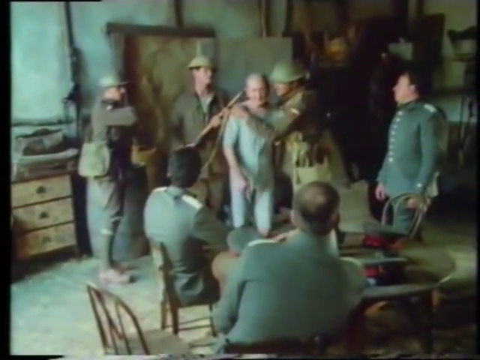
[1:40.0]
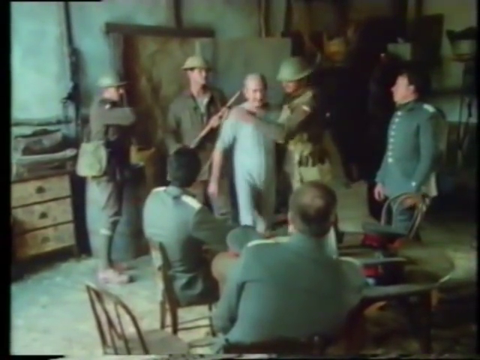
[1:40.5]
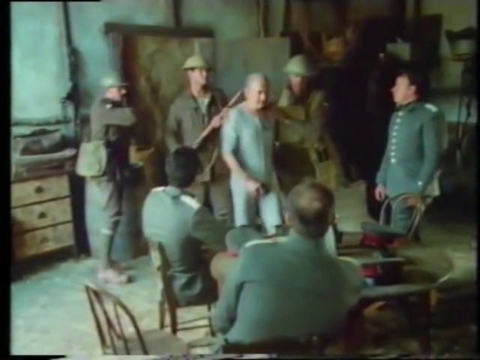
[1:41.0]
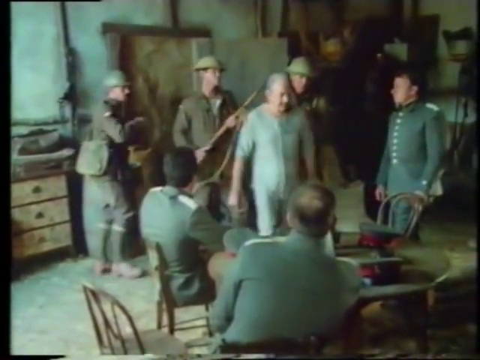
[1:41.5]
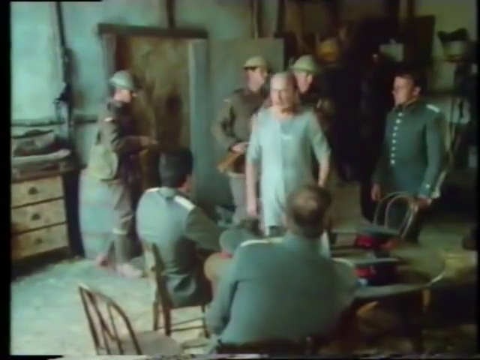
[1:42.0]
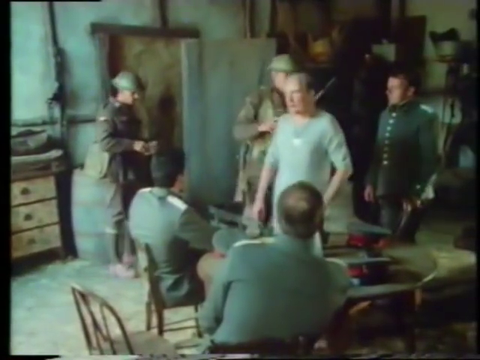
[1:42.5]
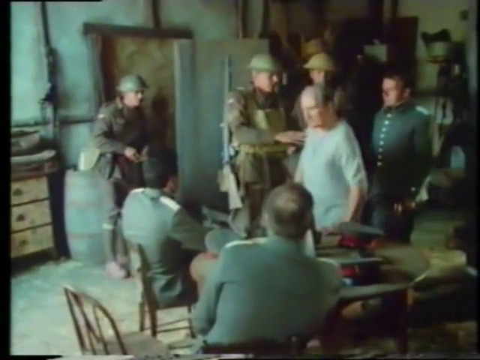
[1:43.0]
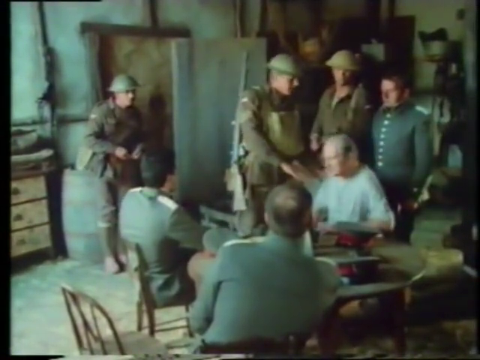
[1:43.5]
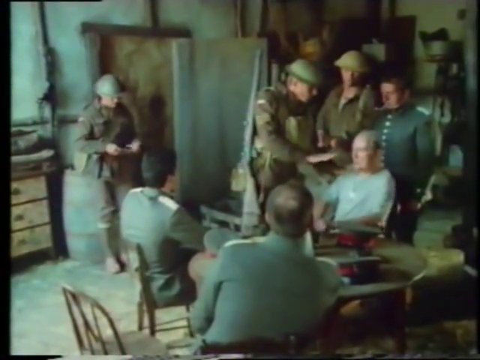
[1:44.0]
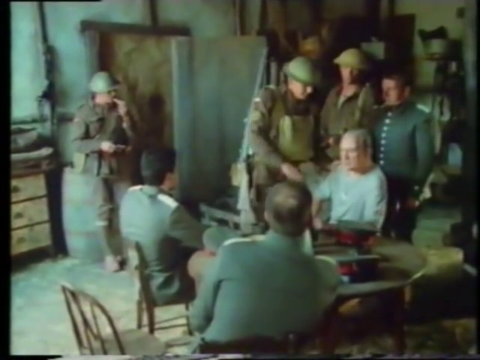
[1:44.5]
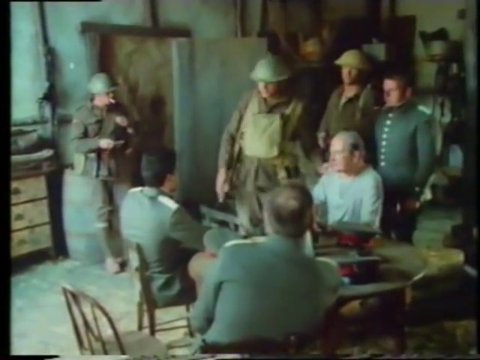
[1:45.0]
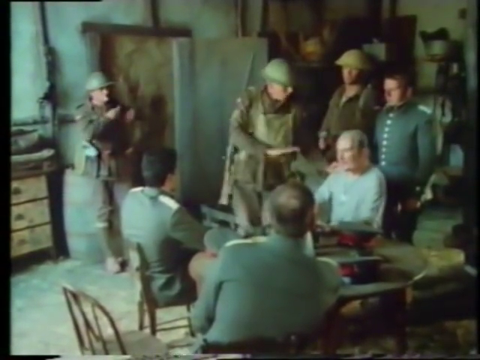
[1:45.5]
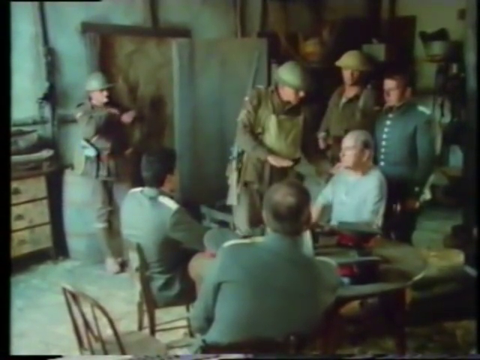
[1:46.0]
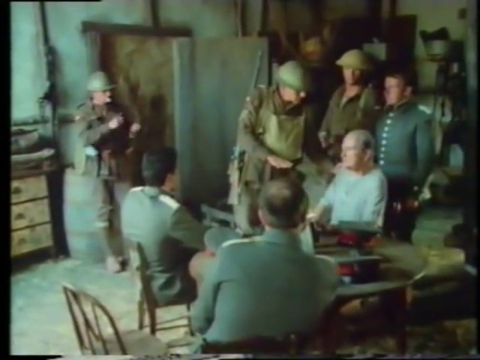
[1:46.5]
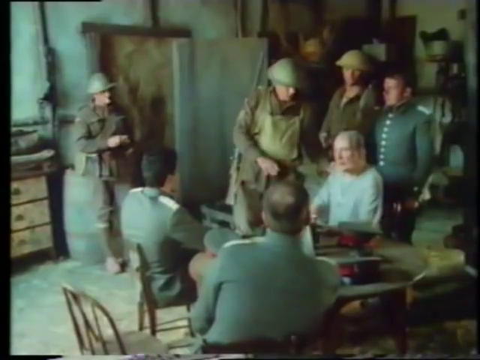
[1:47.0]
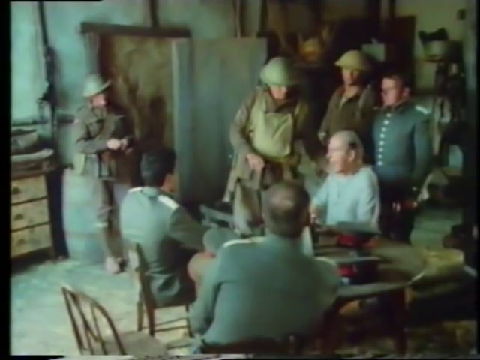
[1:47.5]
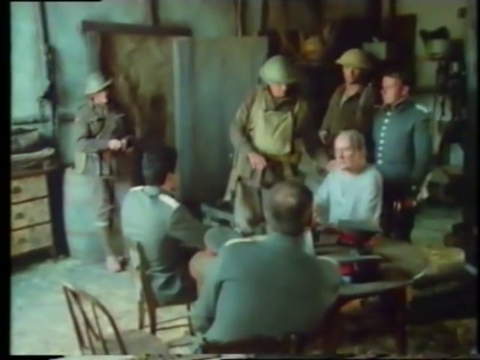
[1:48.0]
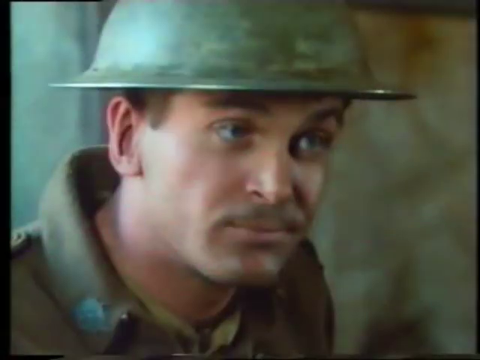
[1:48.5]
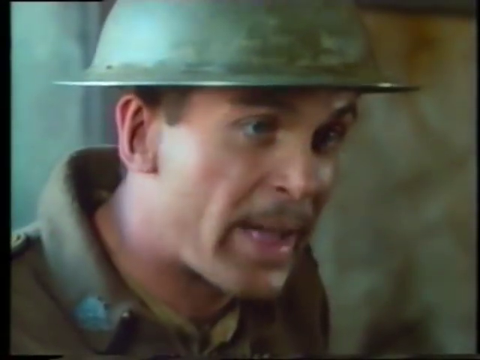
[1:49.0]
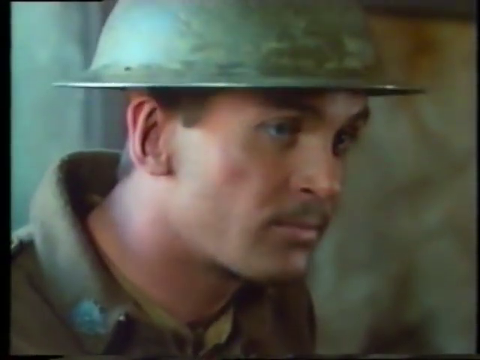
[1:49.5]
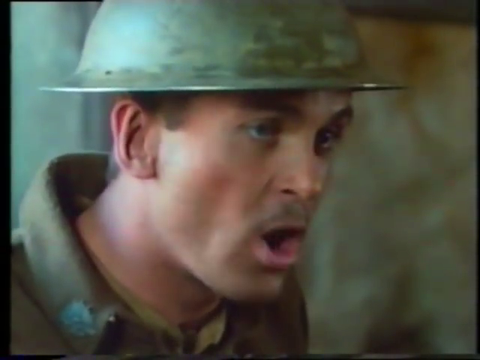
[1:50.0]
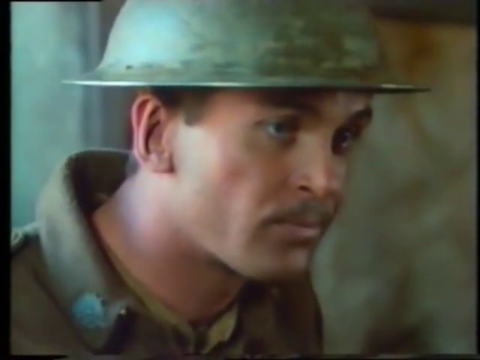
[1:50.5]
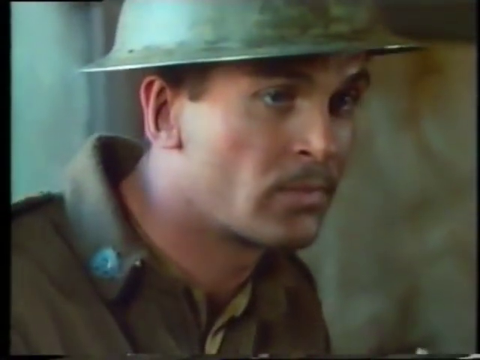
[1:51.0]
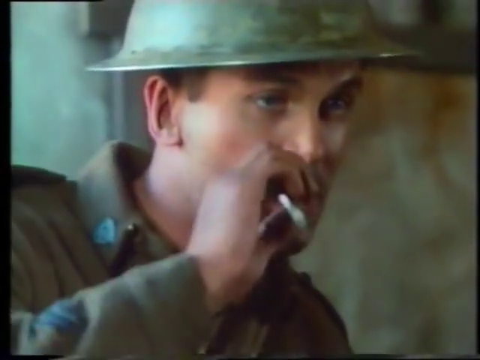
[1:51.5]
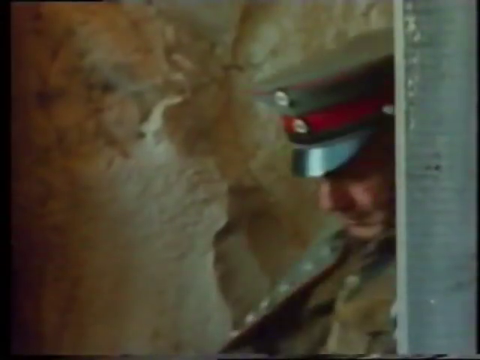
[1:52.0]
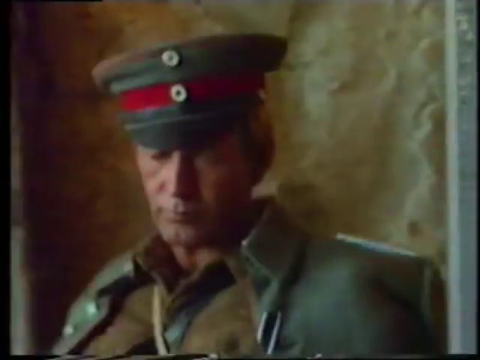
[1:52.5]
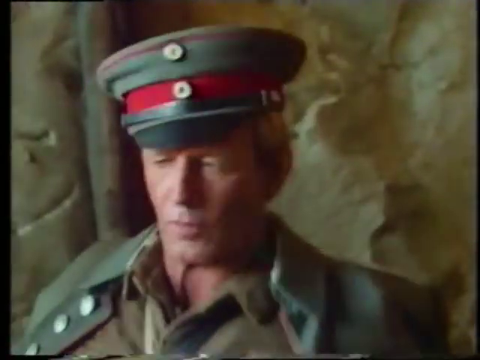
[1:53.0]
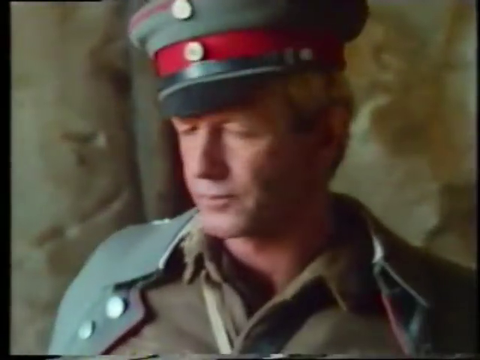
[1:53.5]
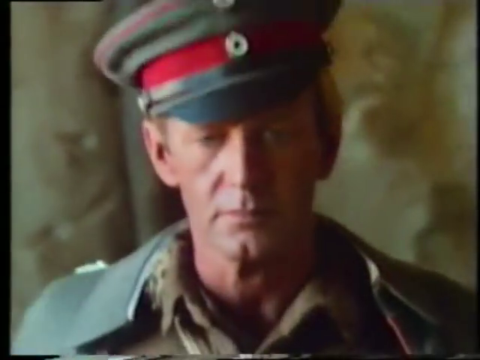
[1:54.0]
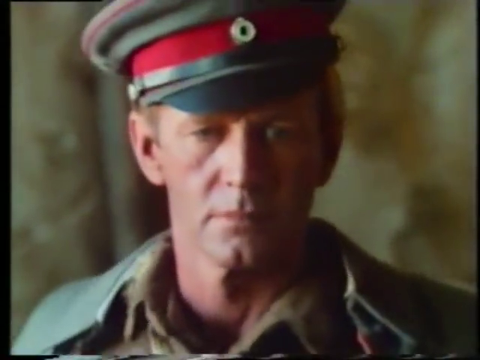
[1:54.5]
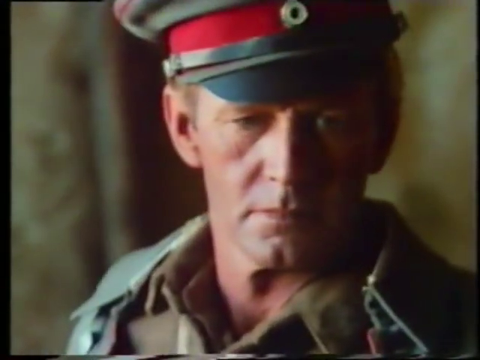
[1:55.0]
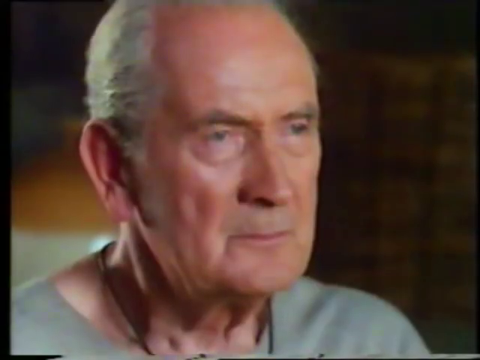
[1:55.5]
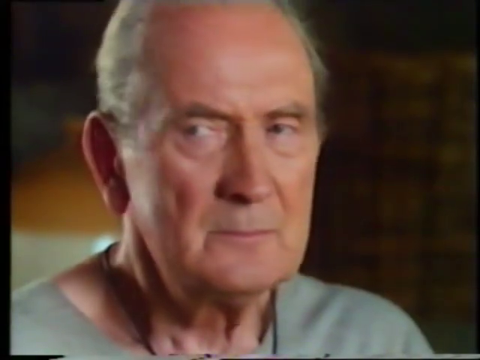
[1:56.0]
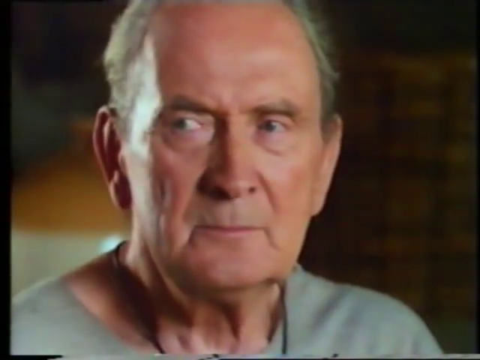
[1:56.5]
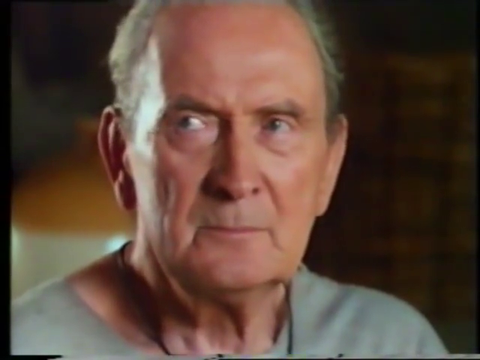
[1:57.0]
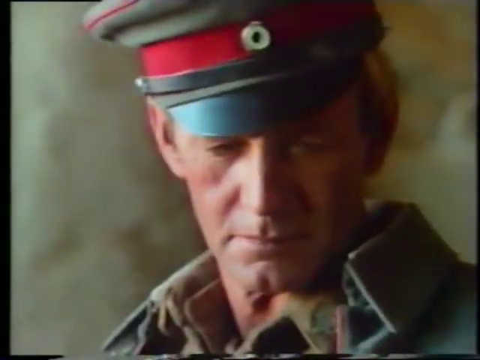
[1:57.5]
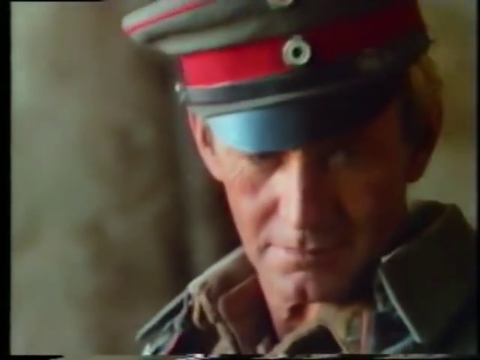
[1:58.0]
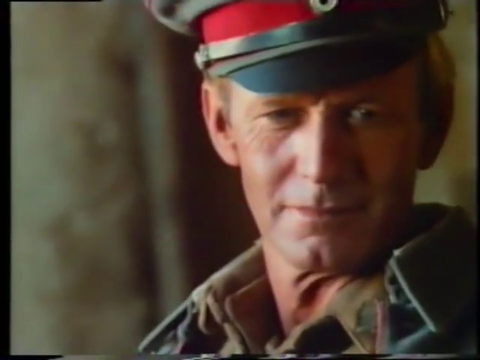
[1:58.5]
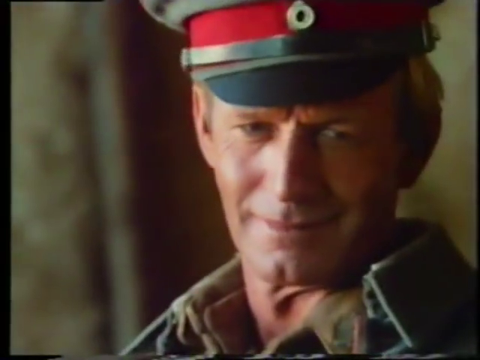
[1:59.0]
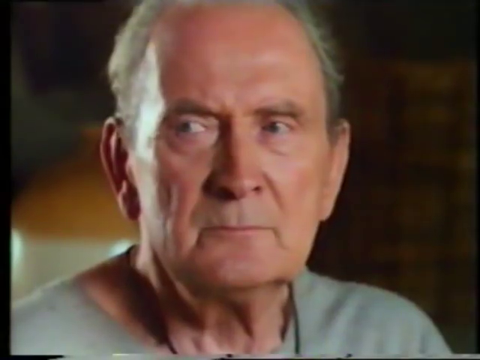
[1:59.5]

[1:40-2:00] Military men are in a room with a lot of furniture and objects. A group of men in uniform raise their hands in the air and walk in lines as other armed men usher them out of the room. Three generals sit at a round table, while a group of three men with heavy weapons usher in an elderly man without a uniform. As he approaches the three men at the round table, one gives him a hug and taps him on the shoulder. They usher the man in to sit, and he sits with the group of generals. A man talks and smokes. Another man walks into the space and smiles at the man who was ushered in. They look at him in a funny way, as if he is being asked questions, and they have a conversation. One of them smokes a cigarette.